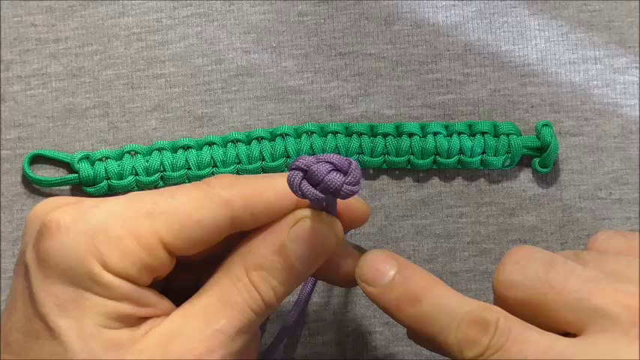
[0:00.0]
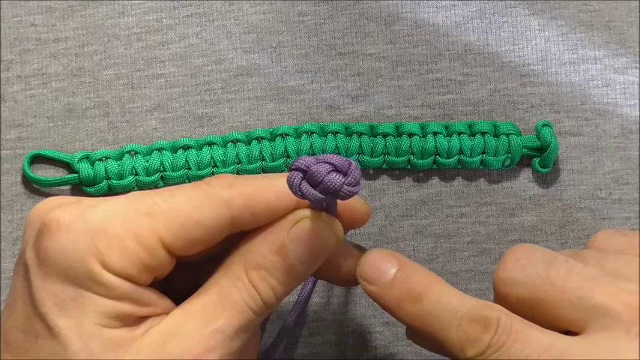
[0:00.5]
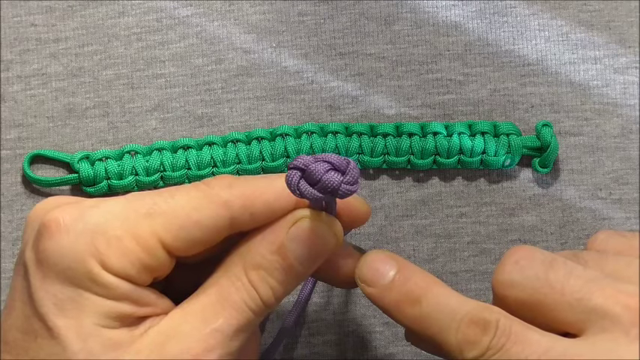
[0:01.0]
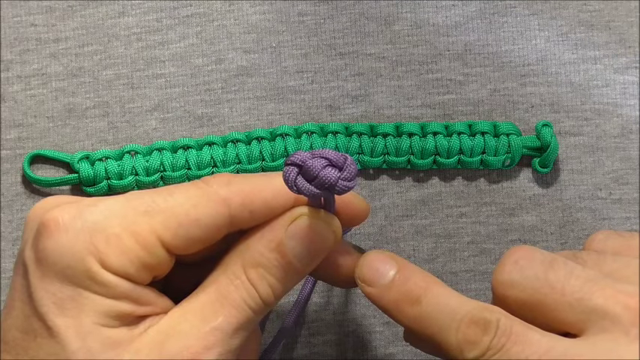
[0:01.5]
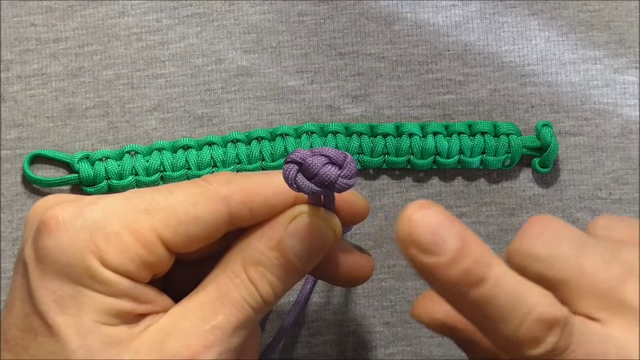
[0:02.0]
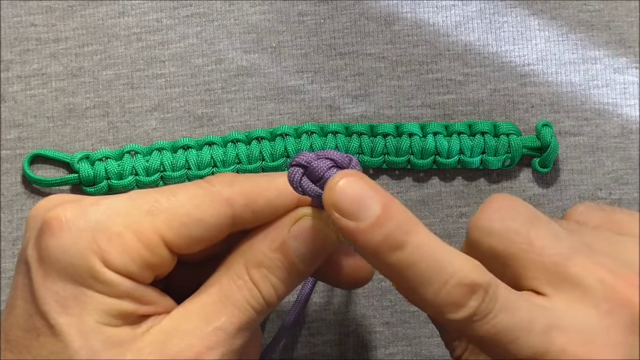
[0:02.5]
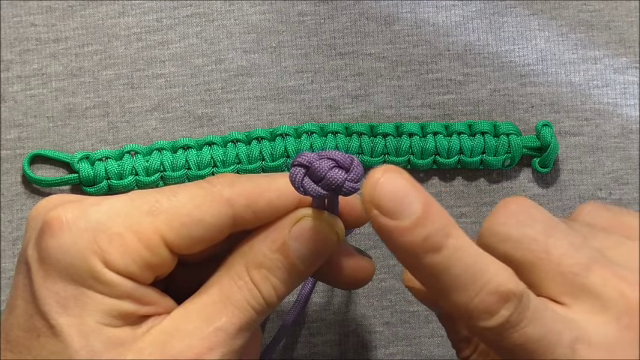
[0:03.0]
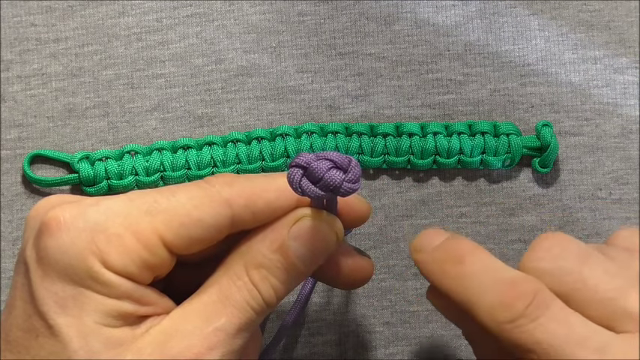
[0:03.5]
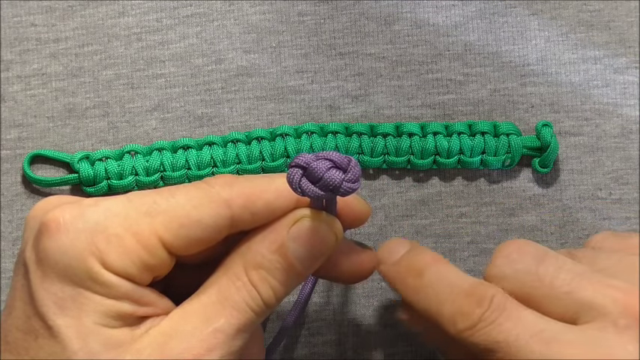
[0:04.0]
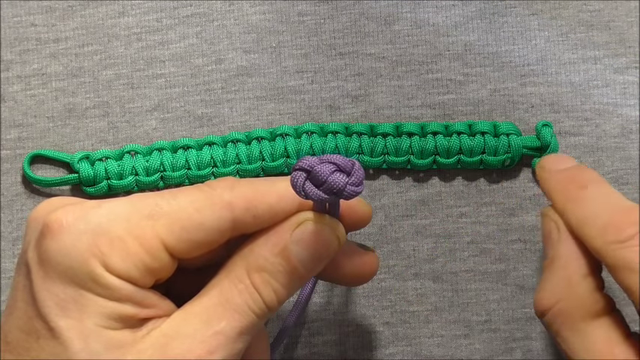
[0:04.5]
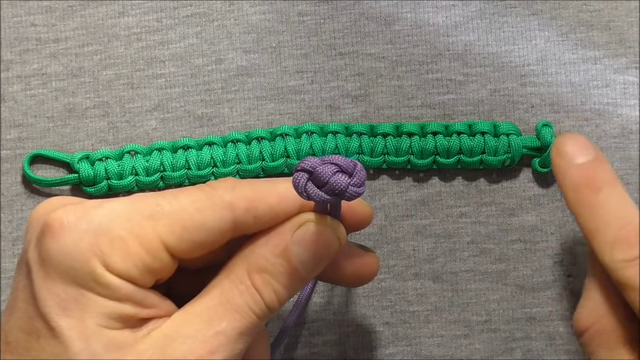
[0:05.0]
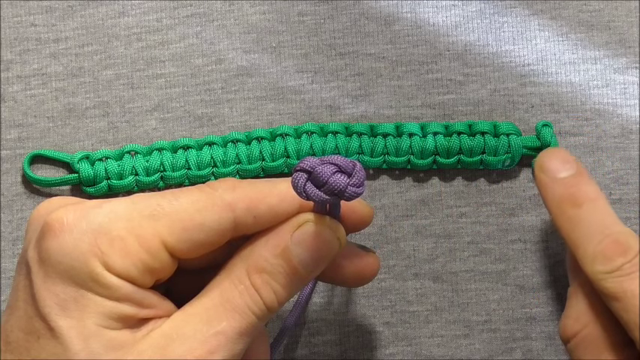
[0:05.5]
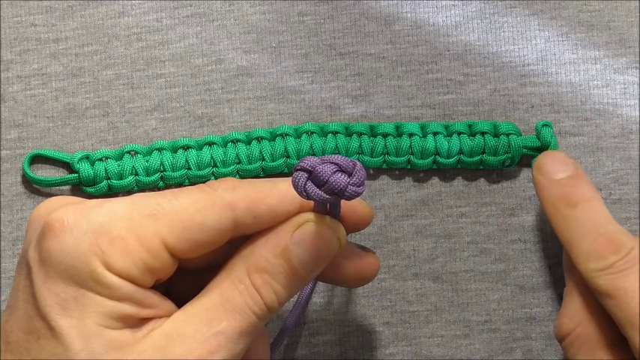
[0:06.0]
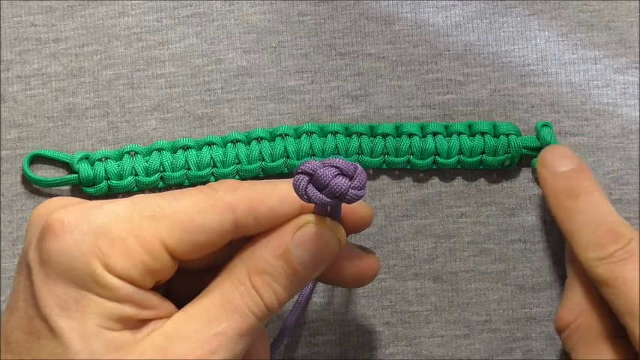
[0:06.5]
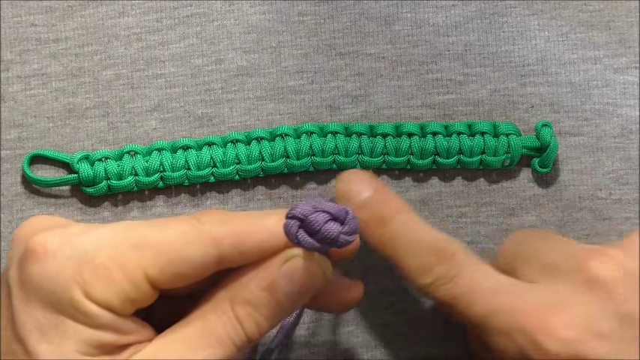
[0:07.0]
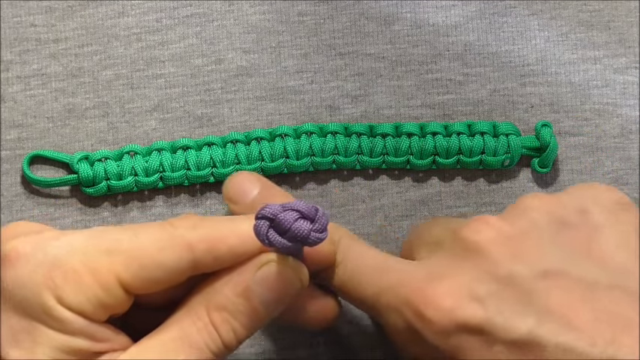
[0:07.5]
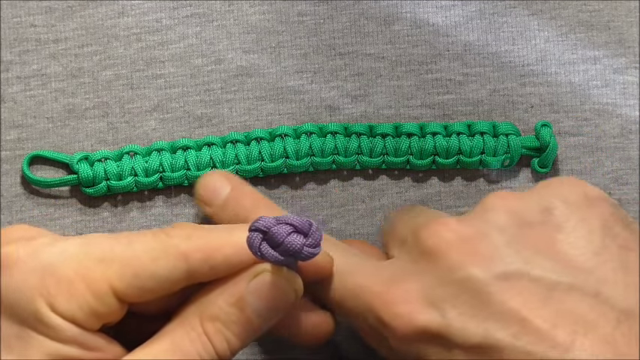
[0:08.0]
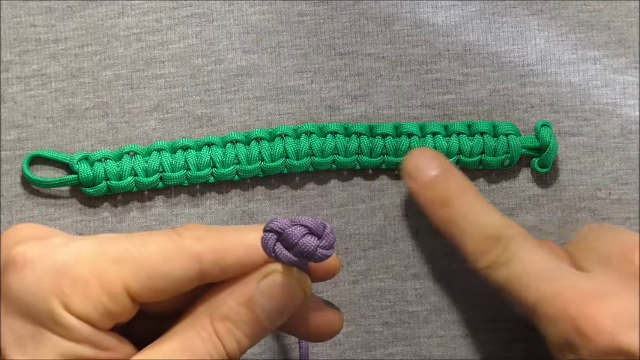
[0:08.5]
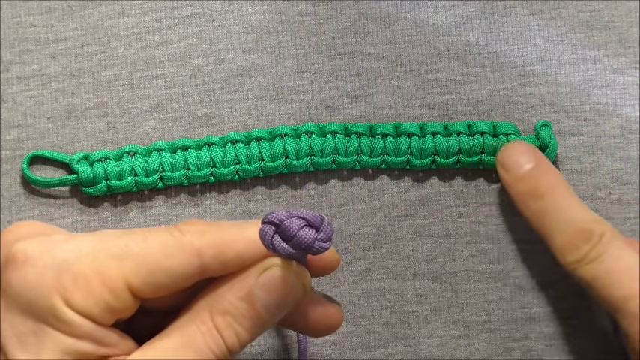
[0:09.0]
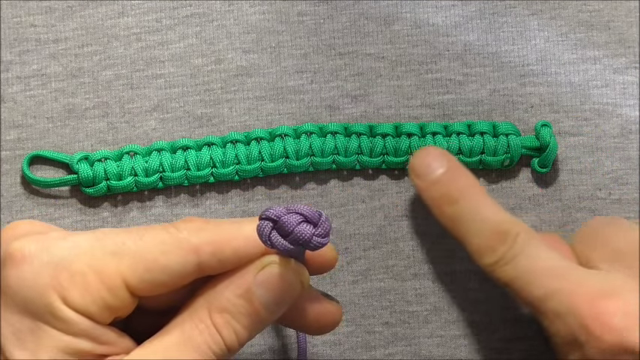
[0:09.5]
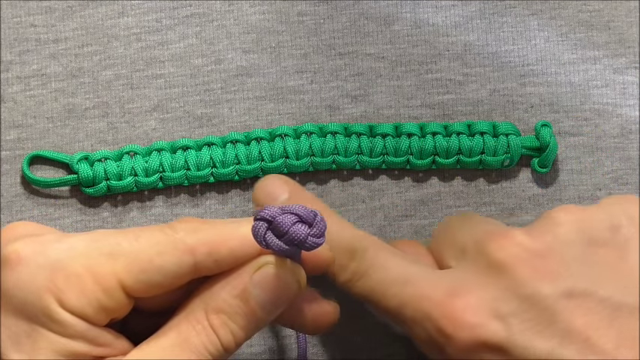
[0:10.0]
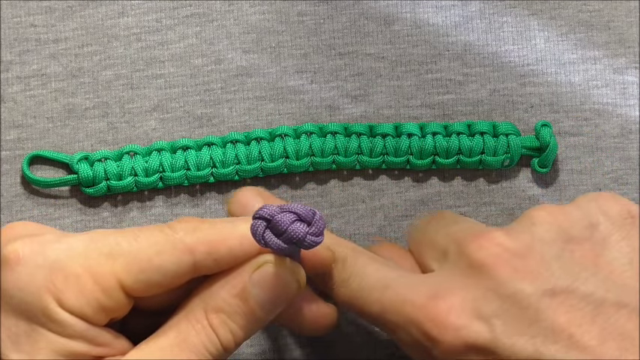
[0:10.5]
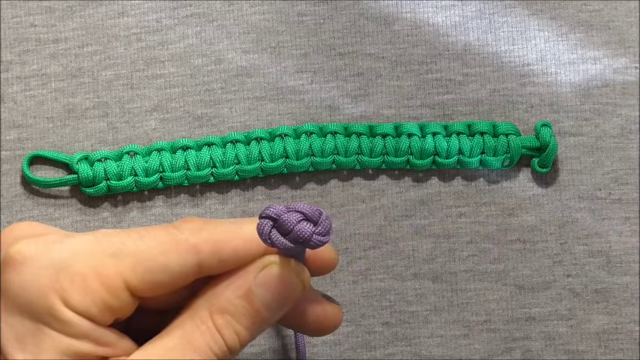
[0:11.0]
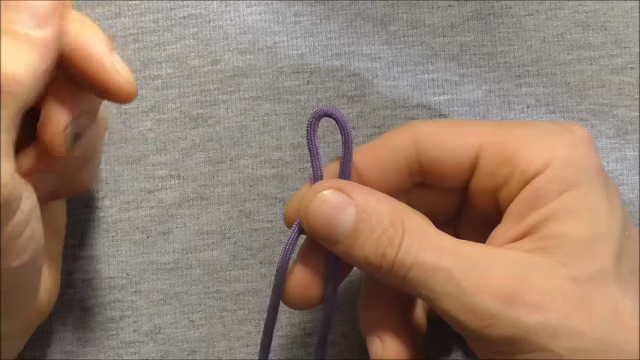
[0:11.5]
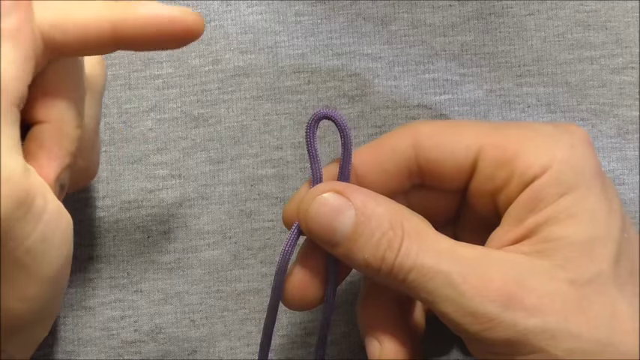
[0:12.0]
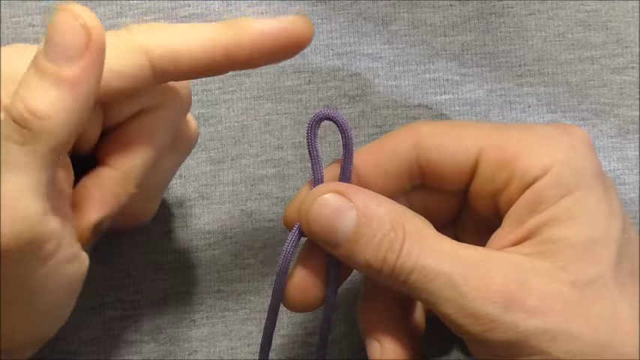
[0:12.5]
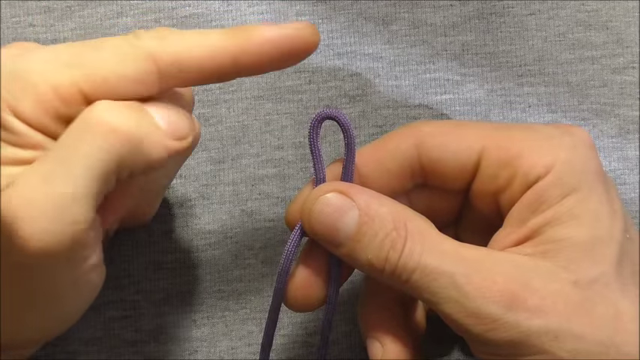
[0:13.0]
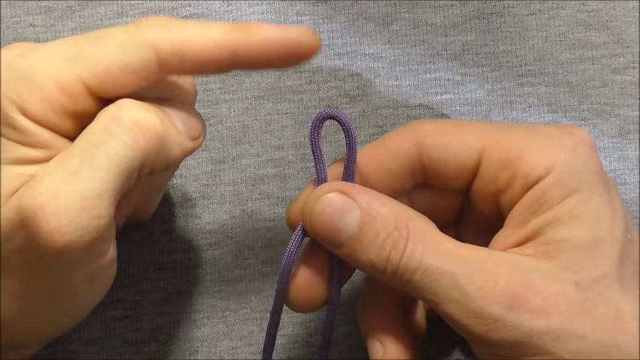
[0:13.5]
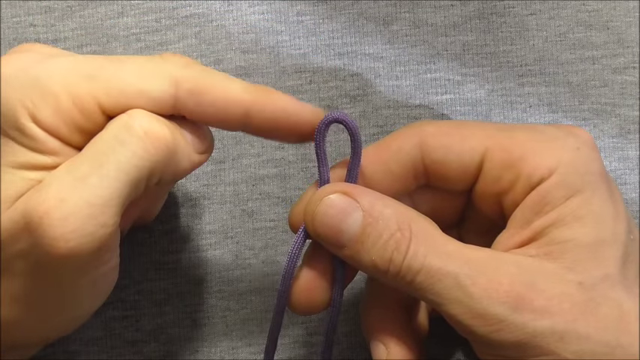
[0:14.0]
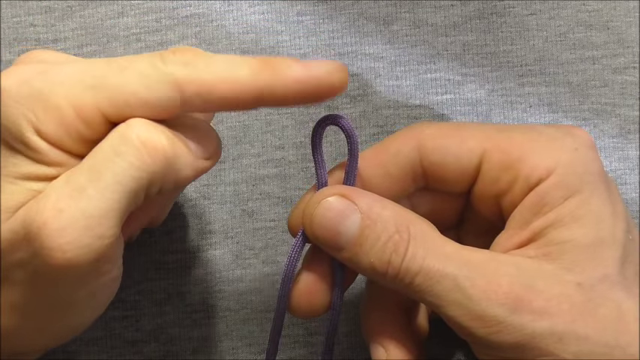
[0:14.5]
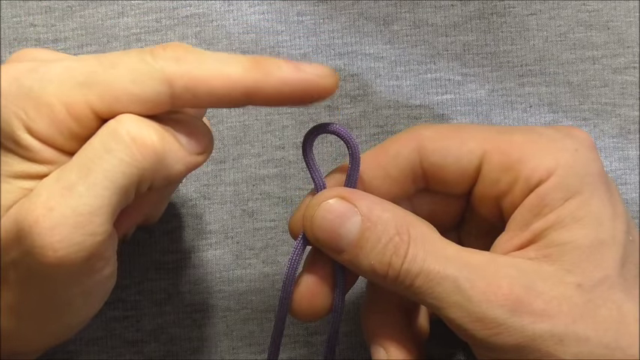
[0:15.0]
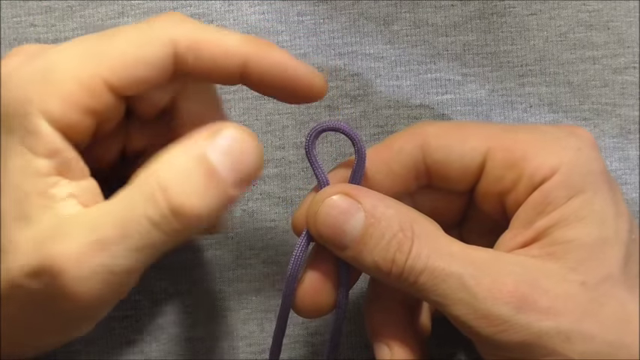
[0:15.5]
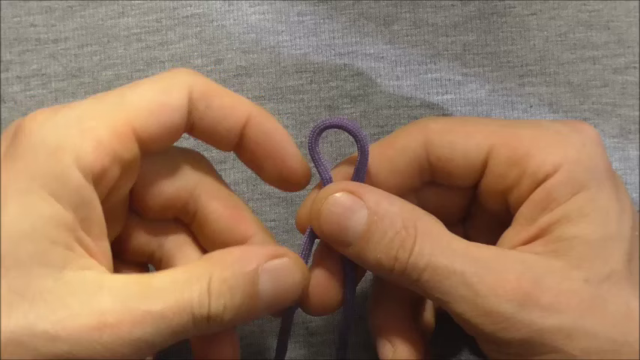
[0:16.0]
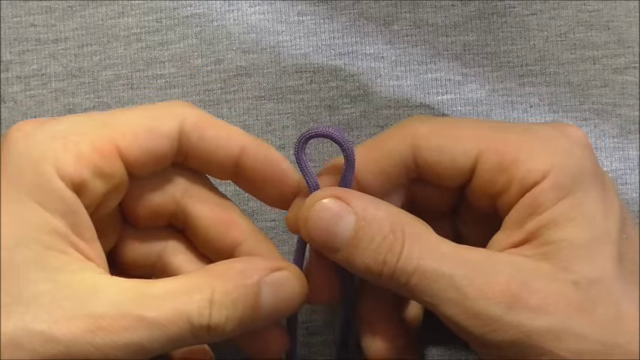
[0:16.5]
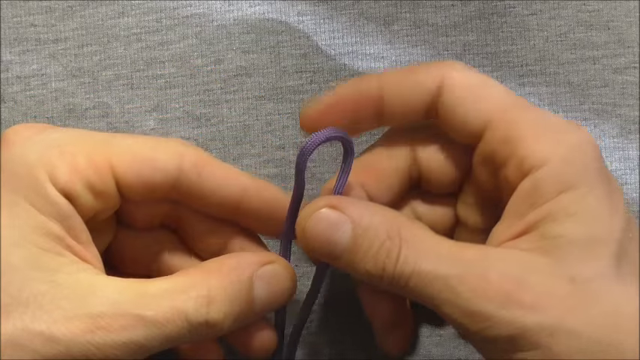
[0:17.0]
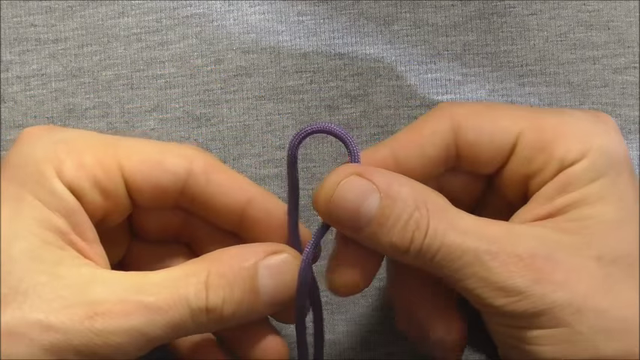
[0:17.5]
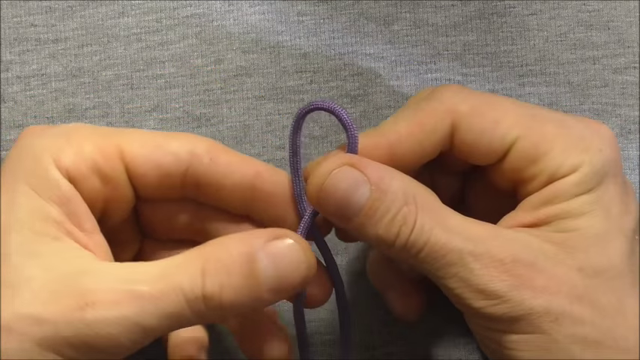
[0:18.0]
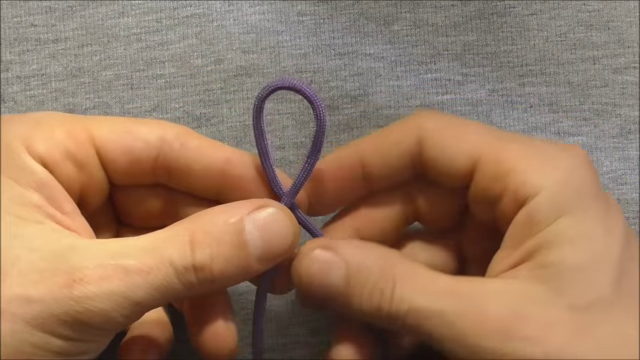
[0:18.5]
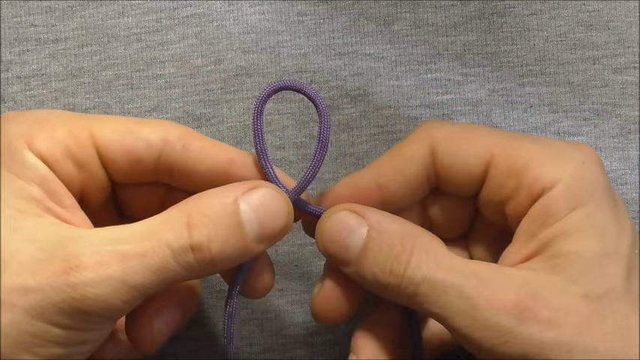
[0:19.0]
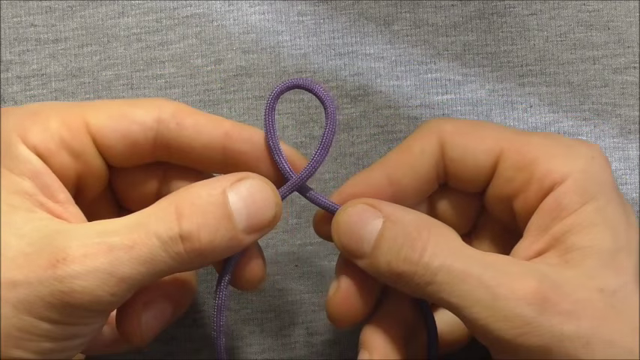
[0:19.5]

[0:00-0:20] A strip of about 3 inches of what looks like a woven crochet strand of green fabric is visible, along with the fingers of two hands. The left hand holds a deep purple braided fabric that is braided into what looks like the shape of a button. The backdrop is a wool-like gray fabric surface. The person's right hand touches the button-shaped weave of the fabric, then the person runs their hand from left to right along the green crocheted fabric, whose shape resembles a caterpillar or a millipede. The right hand then holds the deep purple fabric into a loop while the left index finger points to and touches the loop. Next, the left and right hands begin to arrange the loop.